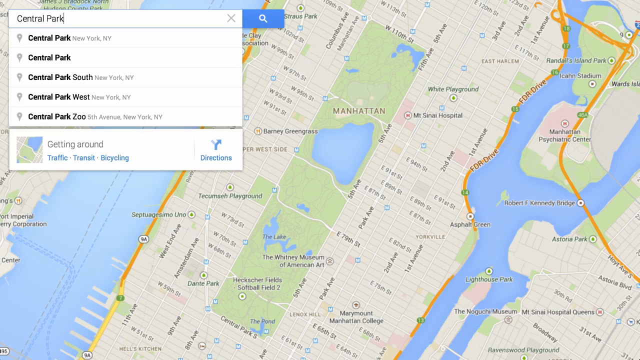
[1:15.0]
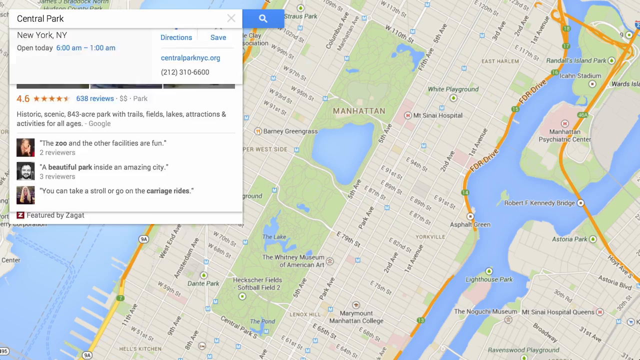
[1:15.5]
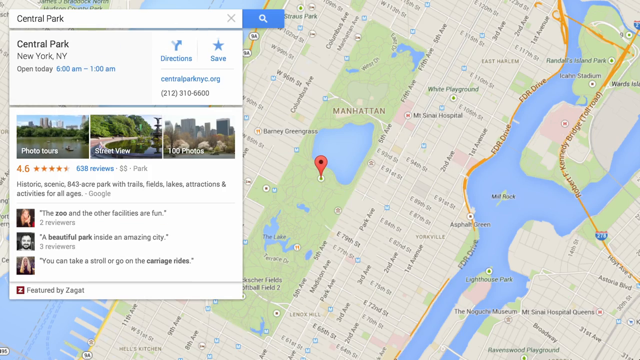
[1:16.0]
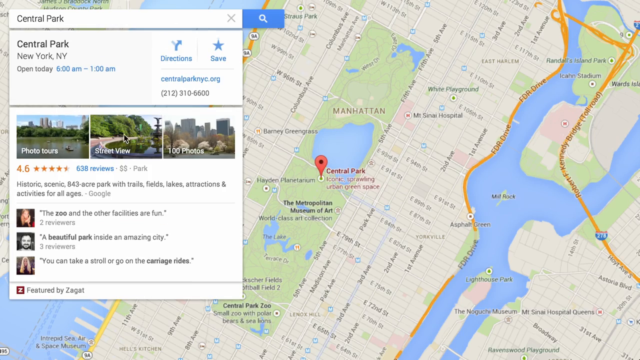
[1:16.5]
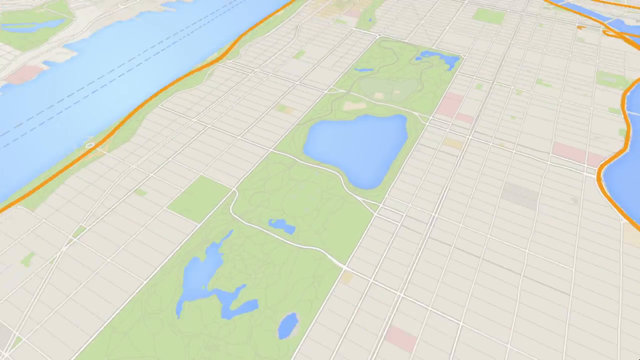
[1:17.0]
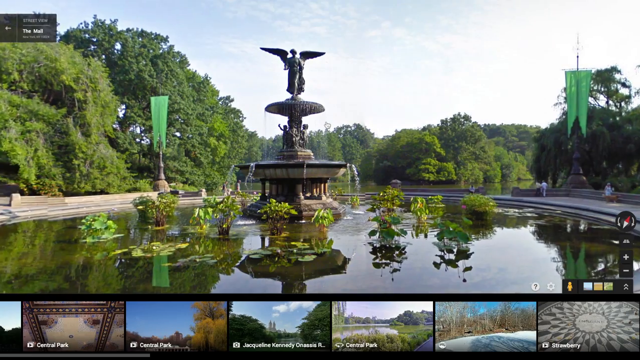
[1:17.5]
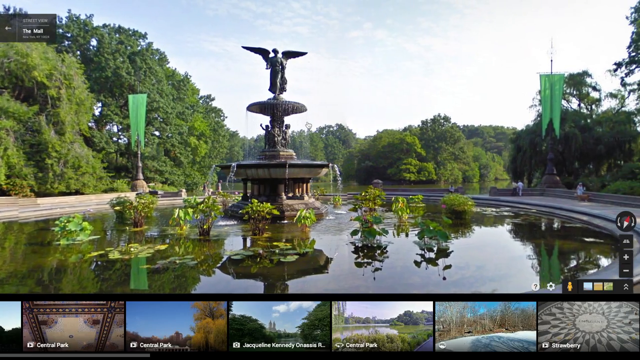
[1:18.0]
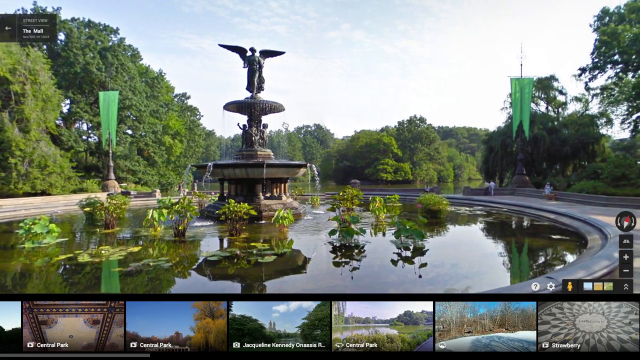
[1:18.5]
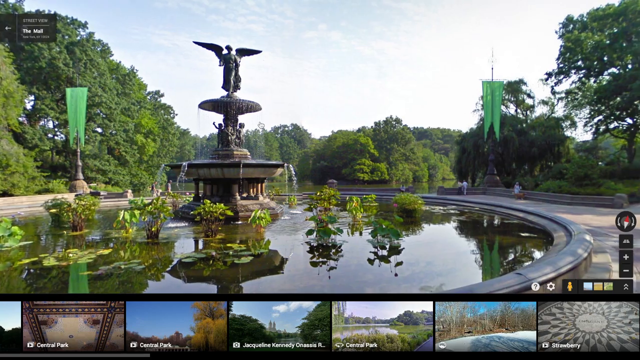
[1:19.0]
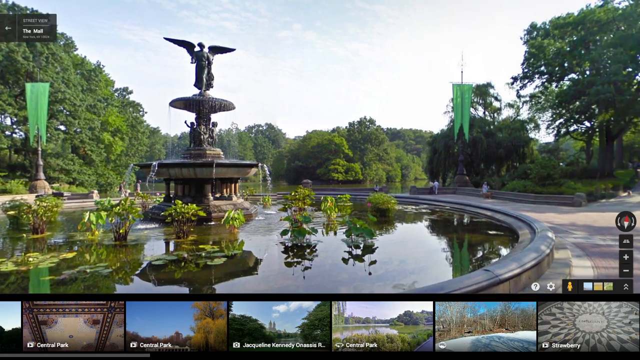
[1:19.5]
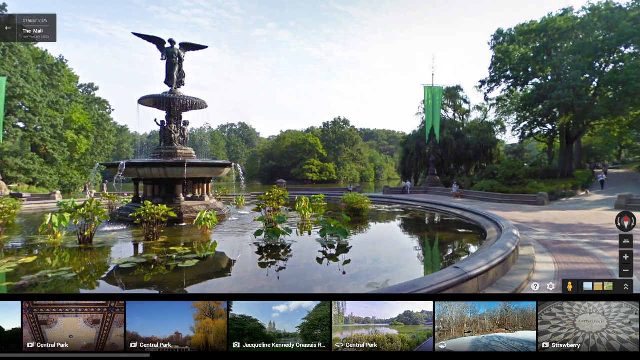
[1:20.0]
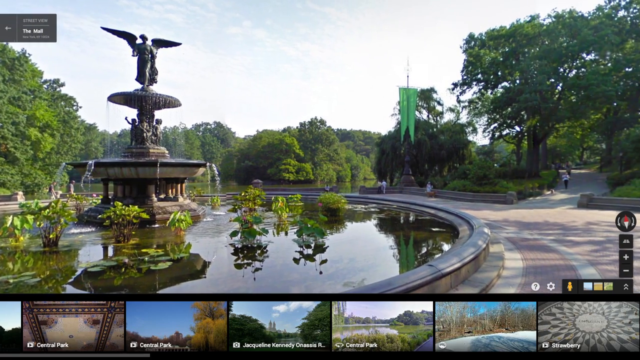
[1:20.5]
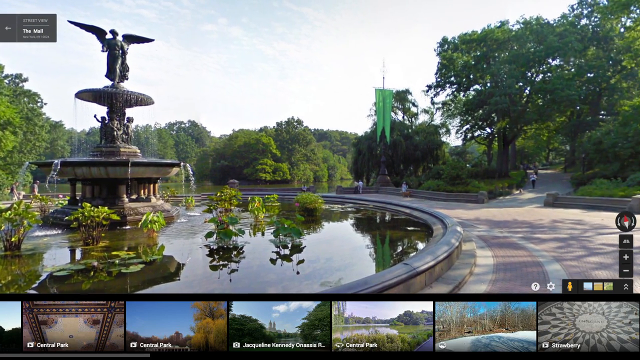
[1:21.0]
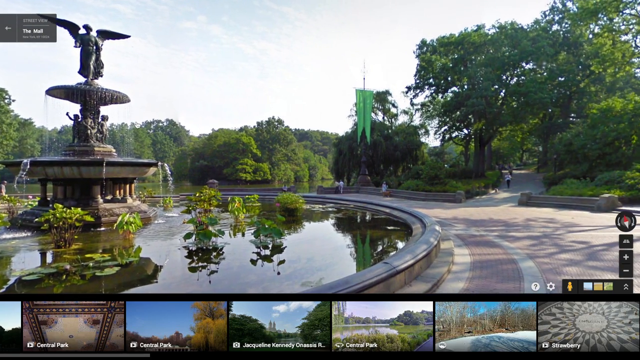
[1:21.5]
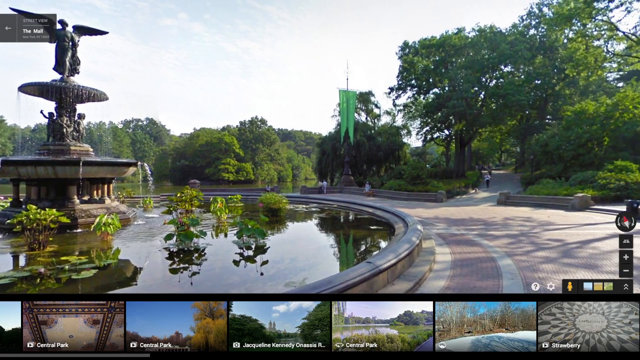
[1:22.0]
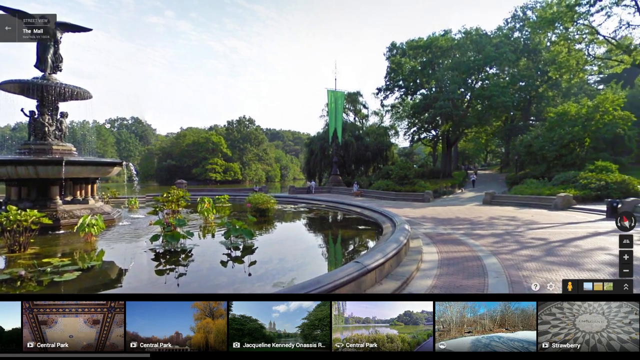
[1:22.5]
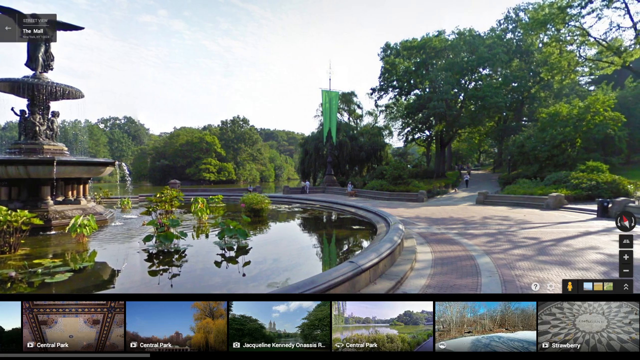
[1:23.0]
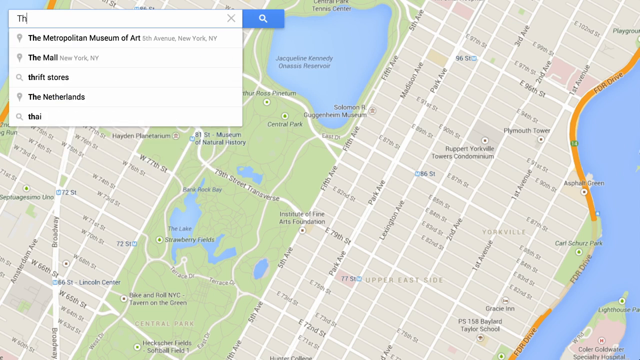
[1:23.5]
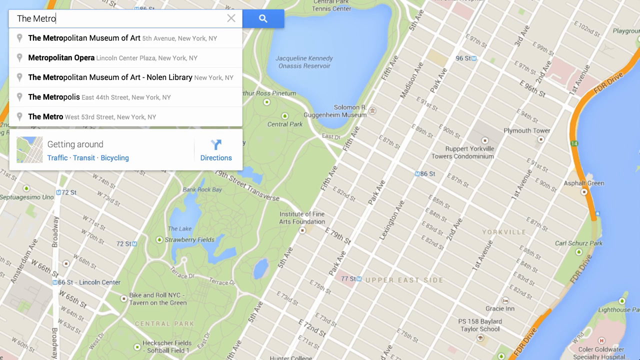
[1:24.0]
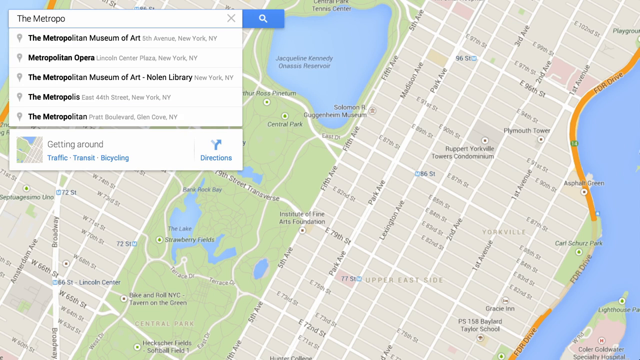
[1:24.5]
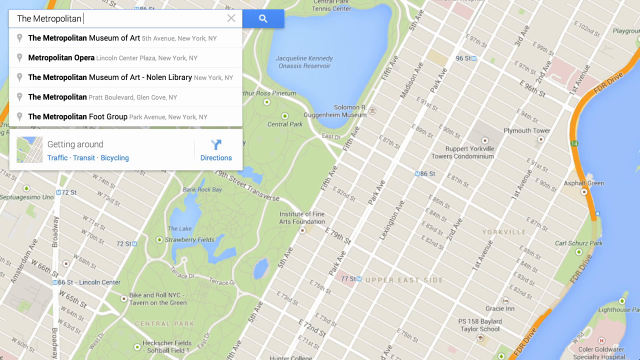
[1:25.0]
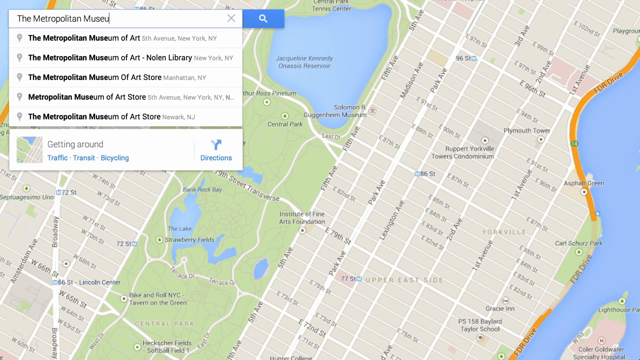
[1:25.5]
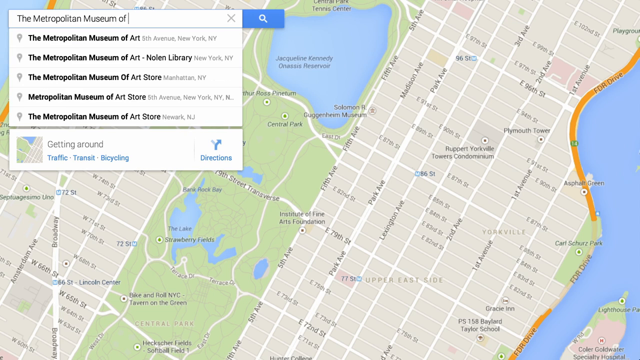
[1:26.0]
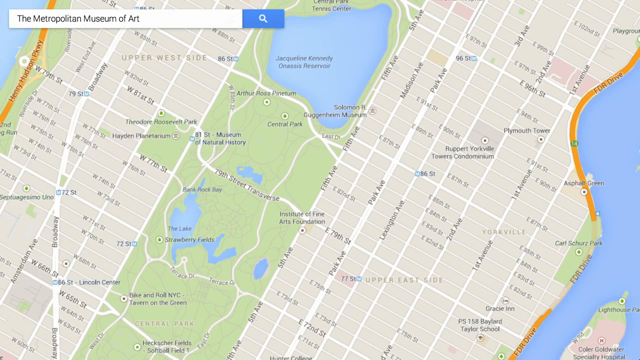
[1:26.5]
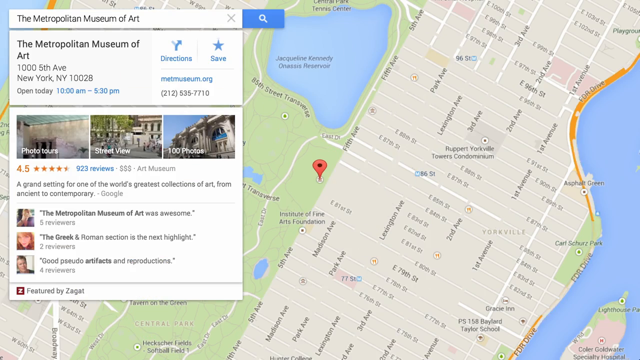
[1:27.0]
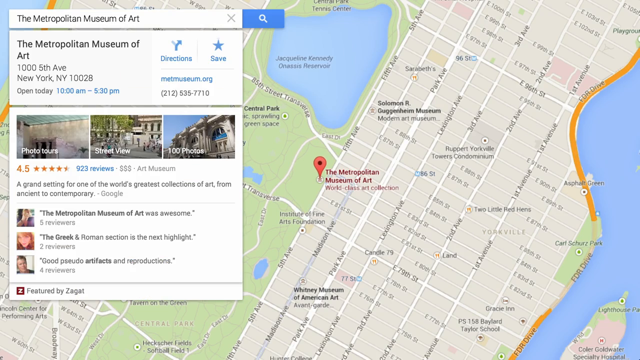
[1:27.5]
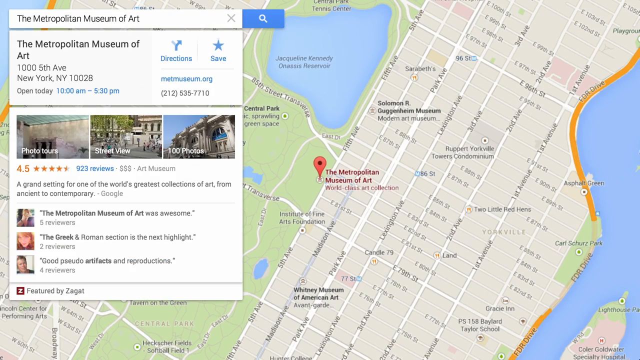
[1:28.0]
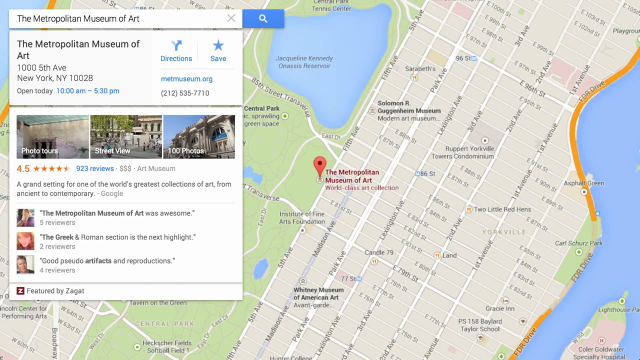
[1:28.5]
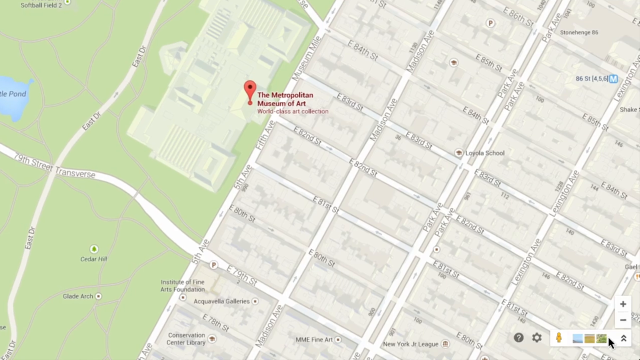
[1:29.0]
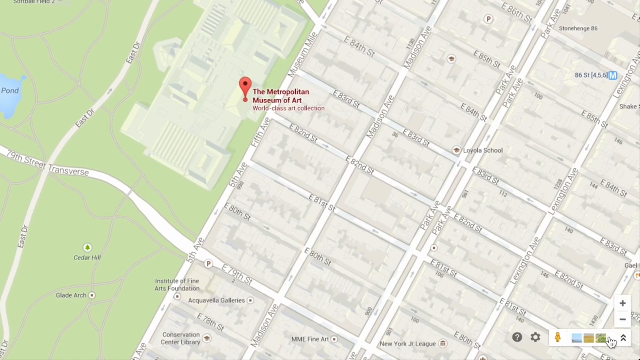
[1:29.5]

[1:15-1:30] A Google Maps image shows what appears to be Central Park, with a large fountain. "Metropolitan Museum of Art" is typed into the search bar; a few other options appear to show up, but the art museum is clicked. The person clicks on street view, which goes into the large fountain, which is not turned on. There are trees around it, and it looks like it could be a summer day that looks kind of humid.